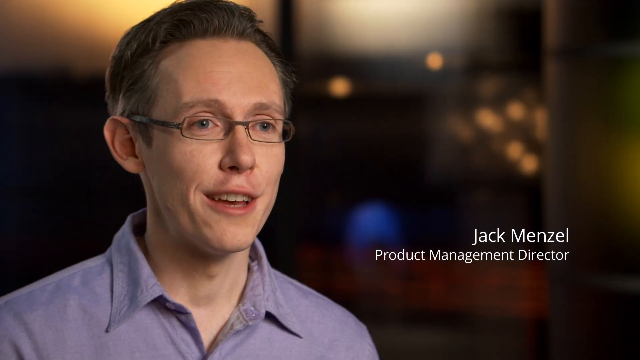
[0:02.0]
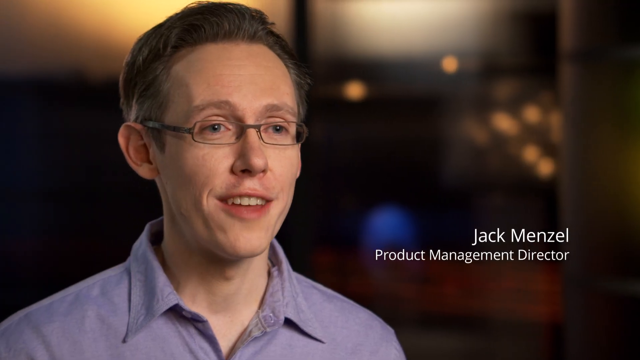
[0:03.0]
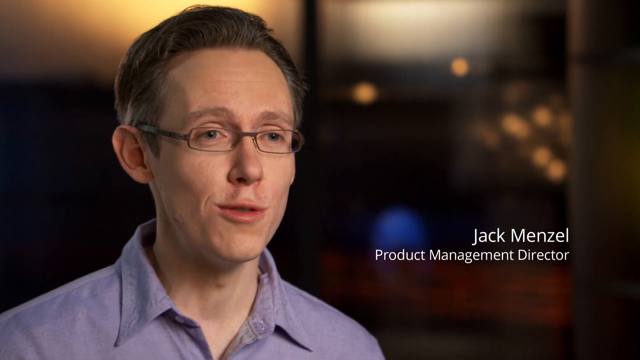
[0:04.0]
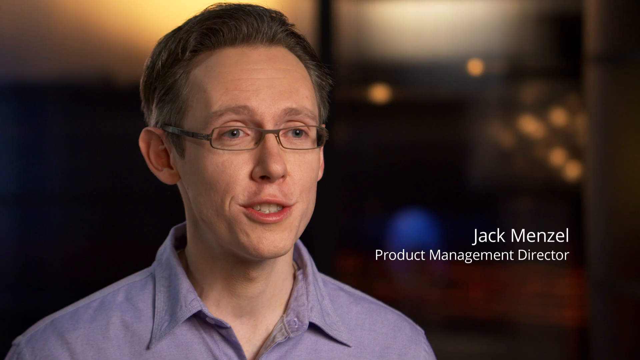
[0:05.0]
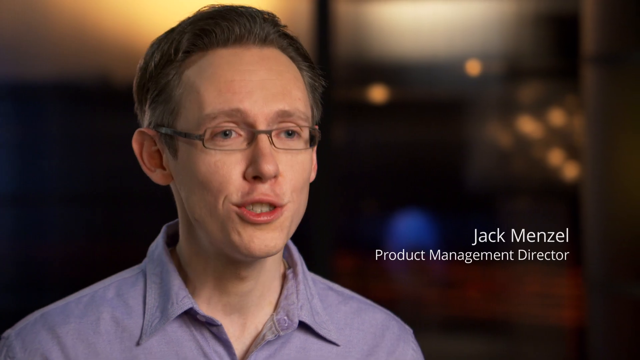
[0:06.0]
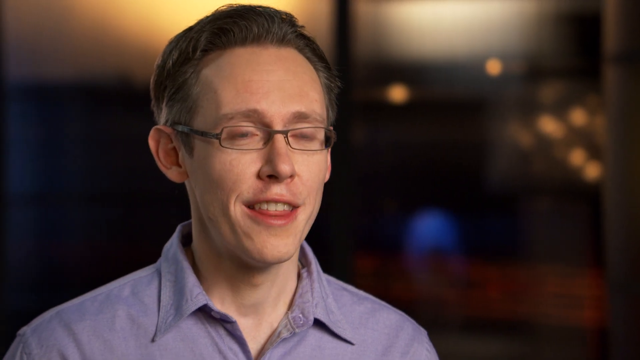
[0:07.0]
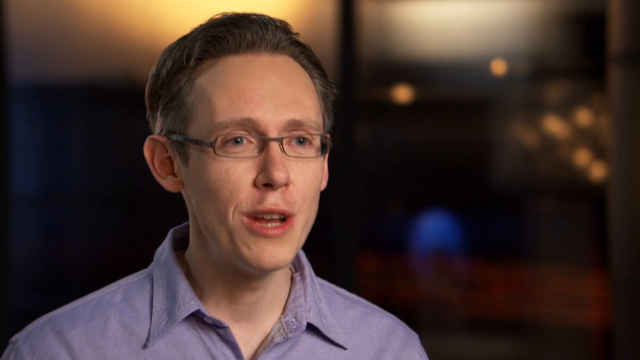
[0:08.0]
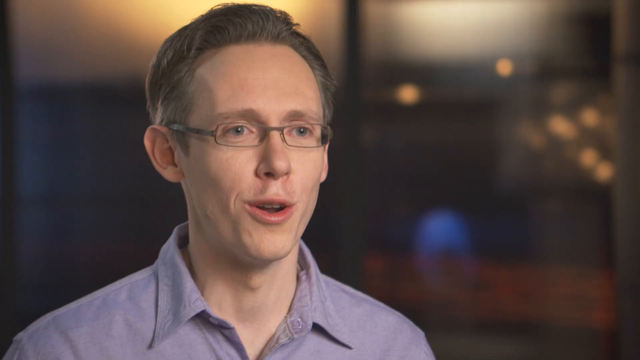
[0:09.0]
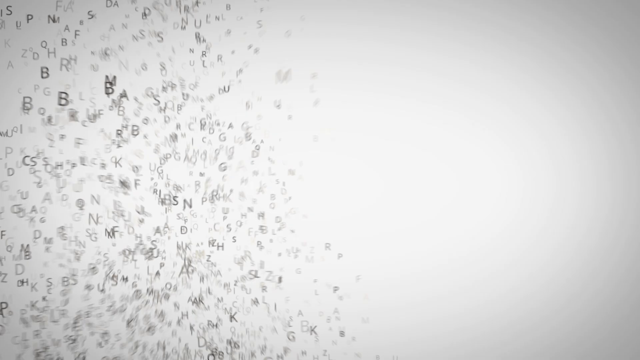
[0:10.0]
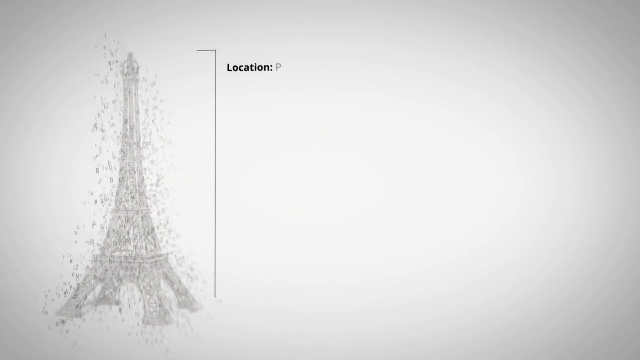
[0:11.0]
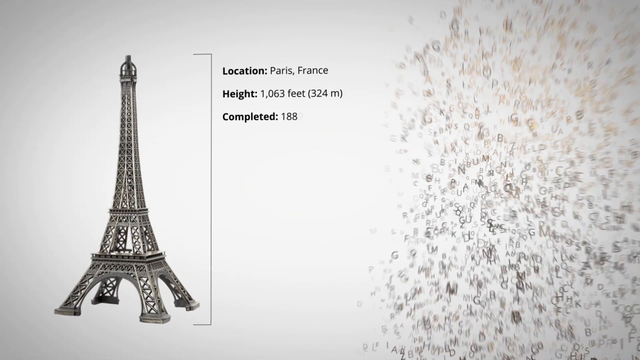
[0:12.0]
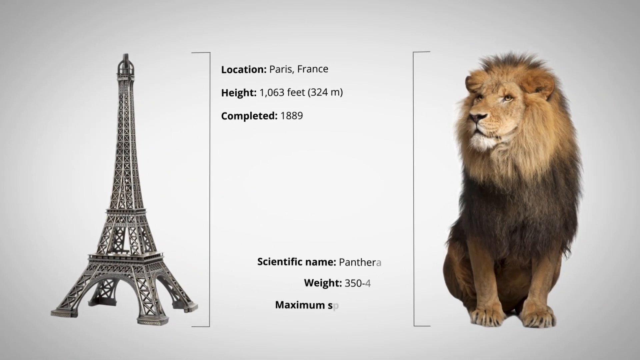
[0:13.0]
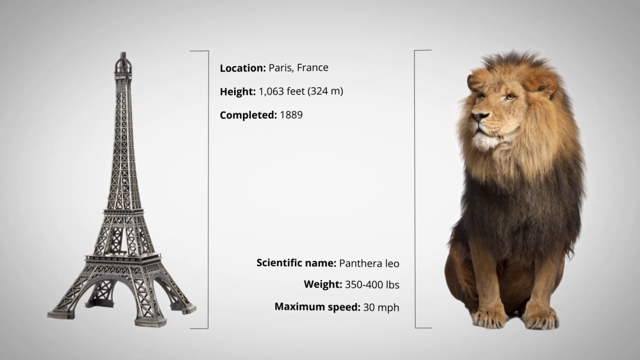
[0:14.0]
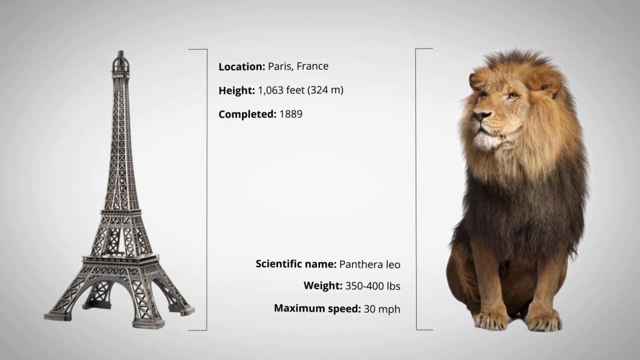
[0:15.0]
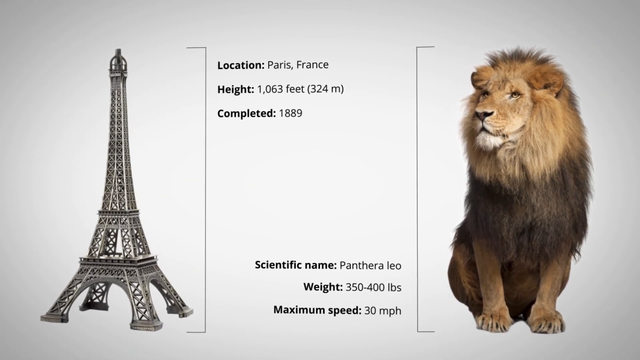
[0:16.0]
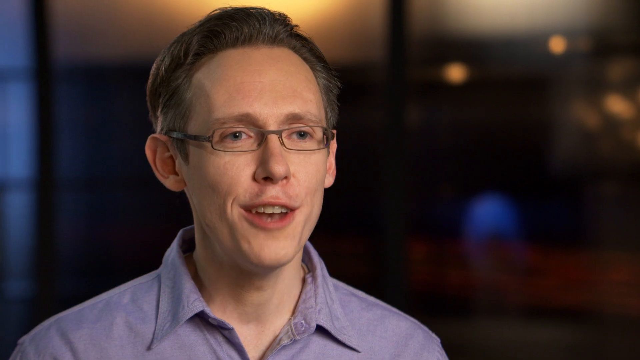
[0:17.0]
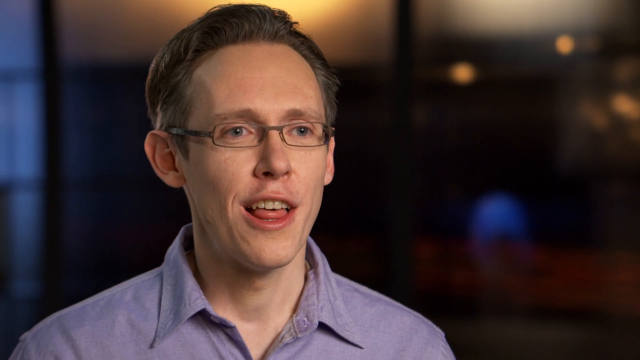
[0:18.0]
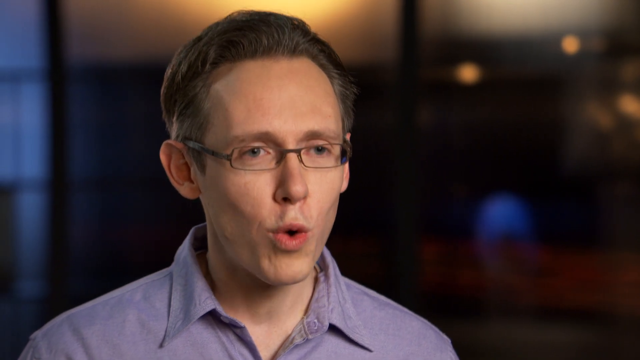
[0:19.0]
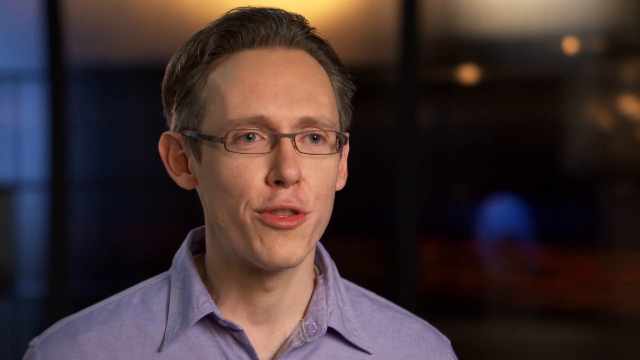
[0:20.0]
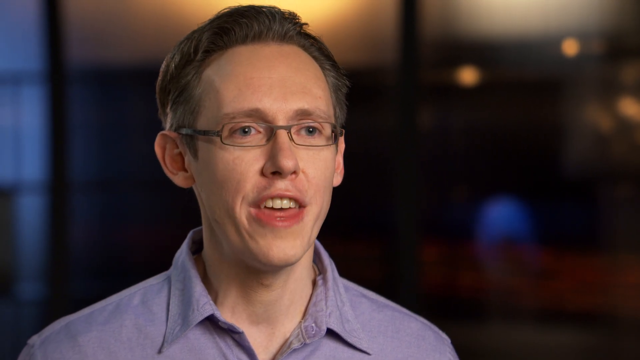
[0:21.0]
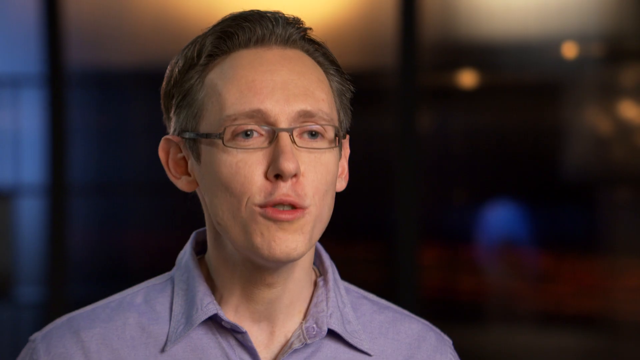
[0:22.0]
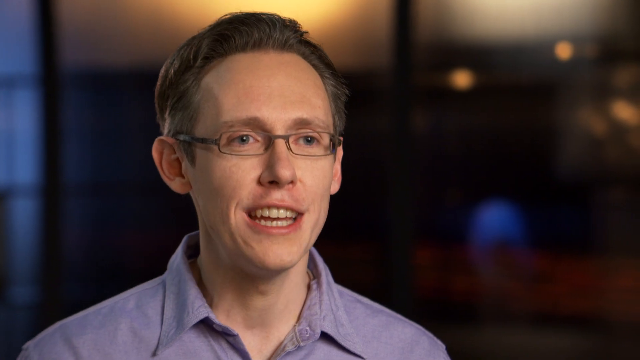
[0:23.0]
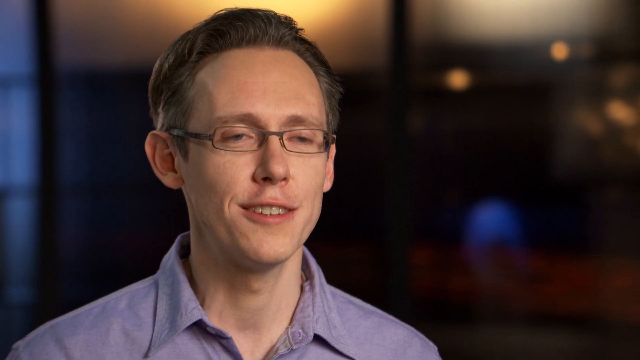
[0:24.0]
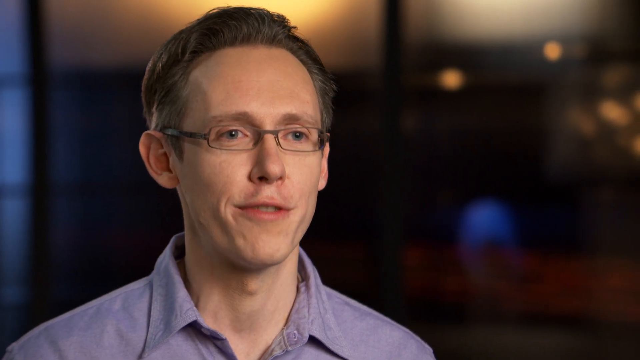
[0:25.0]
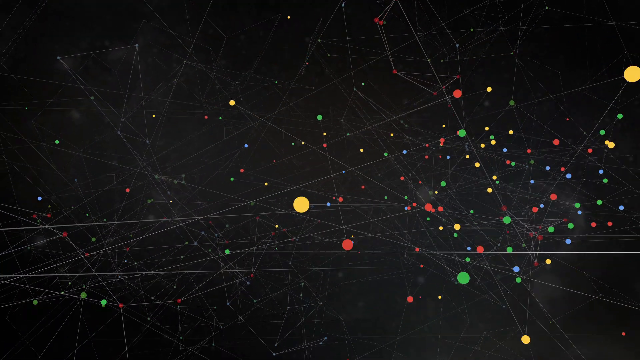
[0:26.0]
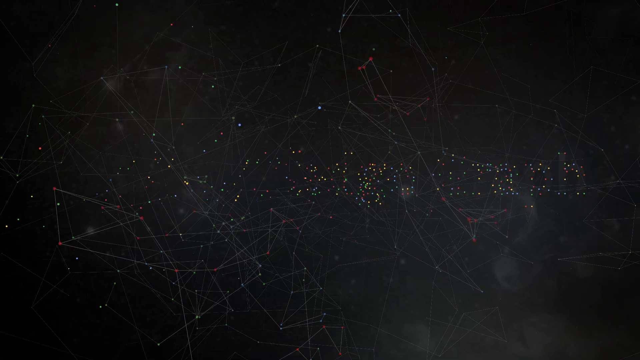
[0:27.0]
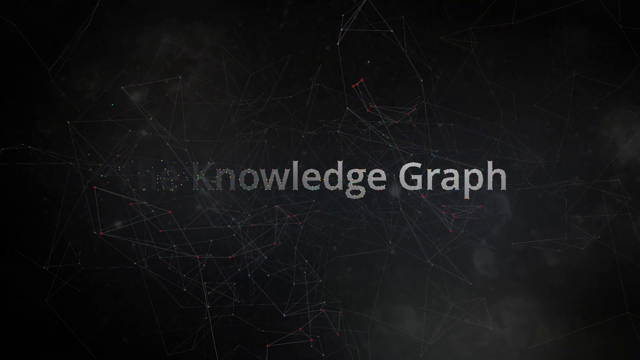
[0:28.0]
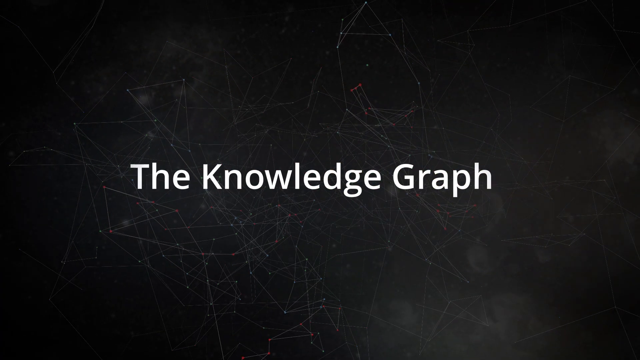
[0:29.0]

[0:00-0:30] A man faces the camera from the left side of the frame. A title in white text gives his name as "Jack Menzel", and beneath it, in slightly smaller font, "Product Management Director". The background is dark and blurry, with some darker gray shades, beige tones at the top, and flecks of what may be reflected light on the right side. The man talks to the camera with kind of animated facial expressions. Next comes a white background with an image of the Eiffel Tower and the text "location Paris, France", "height 1,063 feet (324 M)" and "completed 1889". The man is then shown talking to the camera again for a few seconds. A black background follows, with the text "the knowledge graph" in a white font and, behind it, dots connected by faint lines in a random pattern. Another person talks to the camera for just a second.